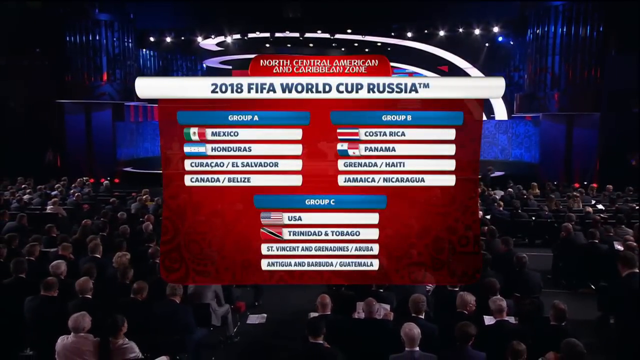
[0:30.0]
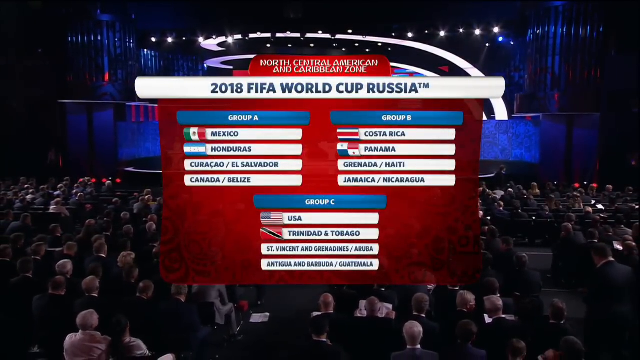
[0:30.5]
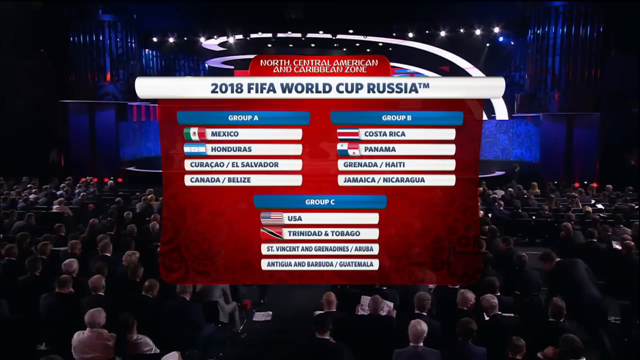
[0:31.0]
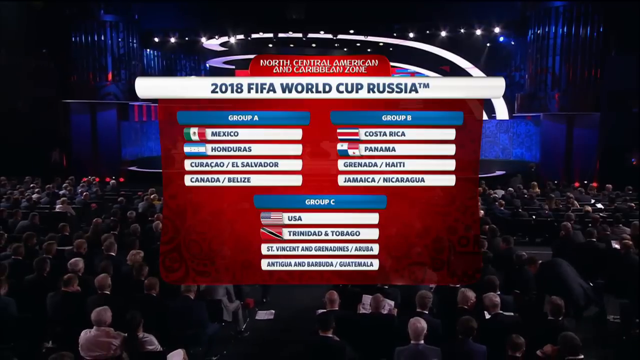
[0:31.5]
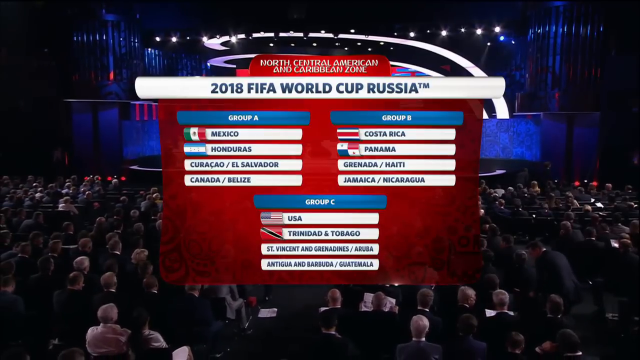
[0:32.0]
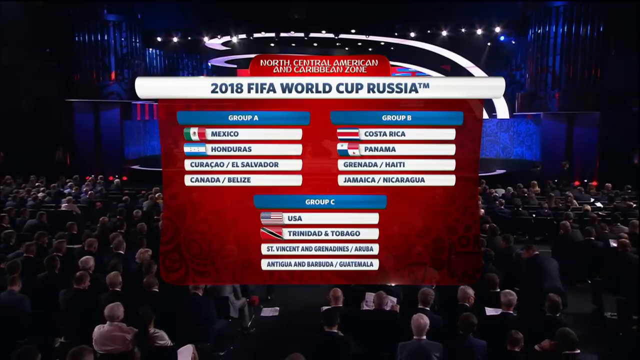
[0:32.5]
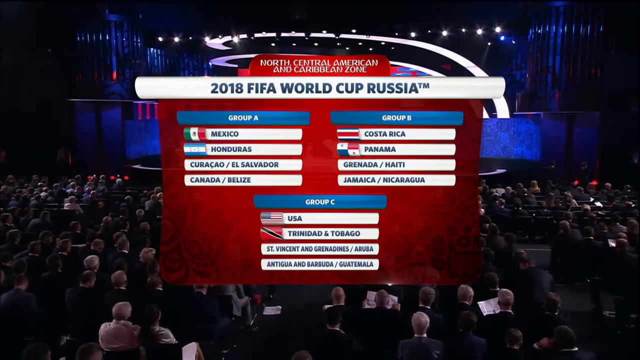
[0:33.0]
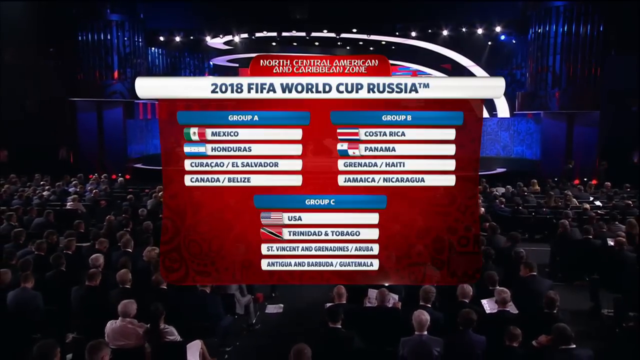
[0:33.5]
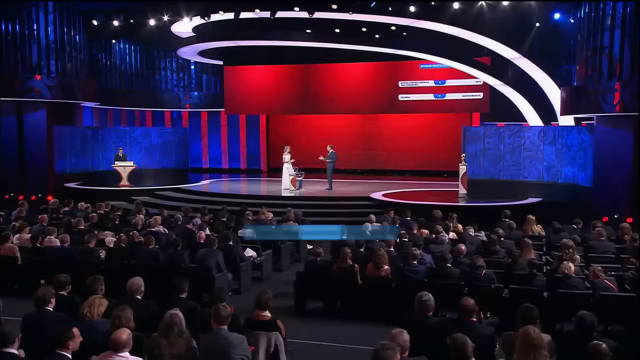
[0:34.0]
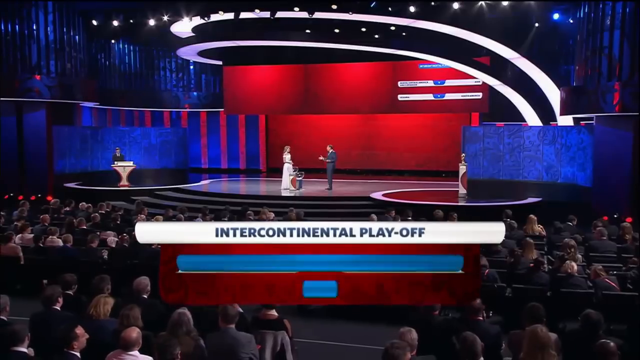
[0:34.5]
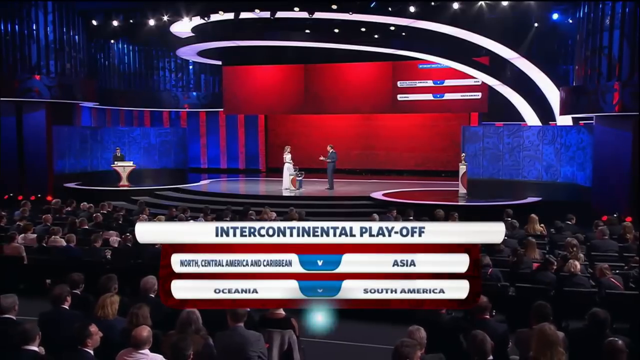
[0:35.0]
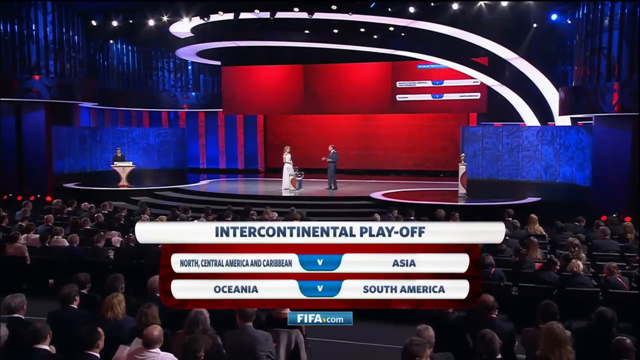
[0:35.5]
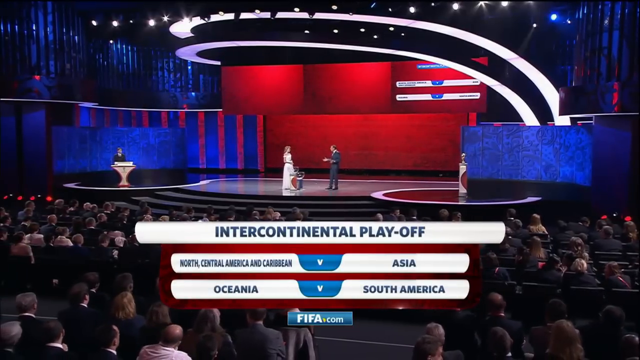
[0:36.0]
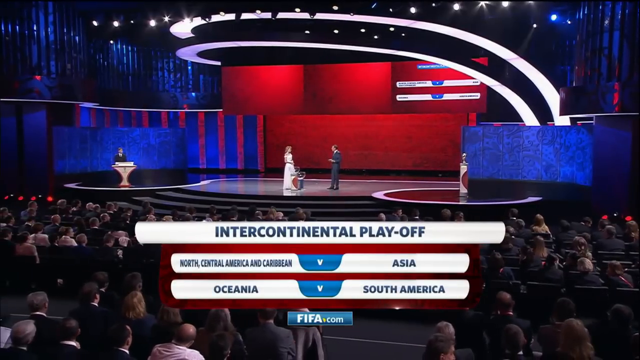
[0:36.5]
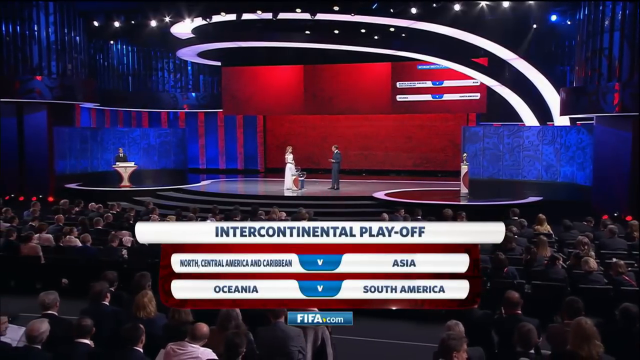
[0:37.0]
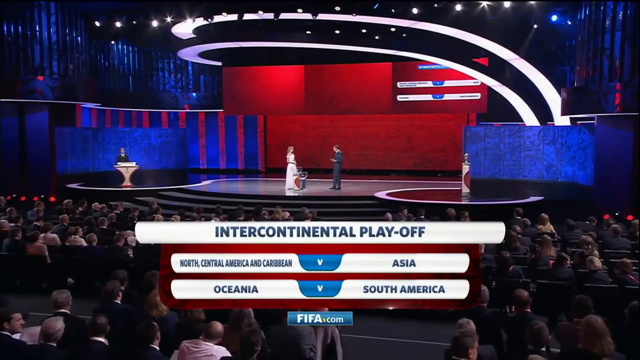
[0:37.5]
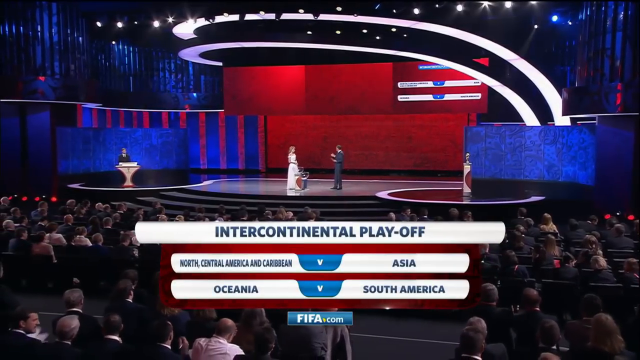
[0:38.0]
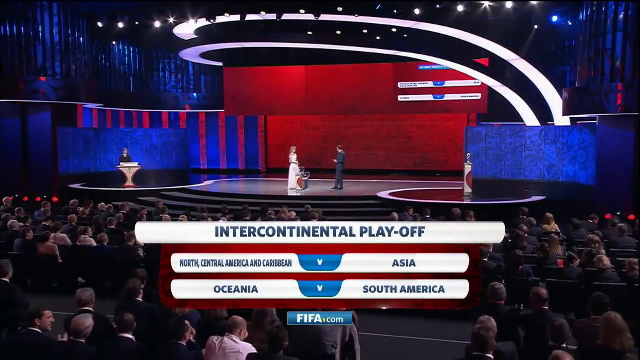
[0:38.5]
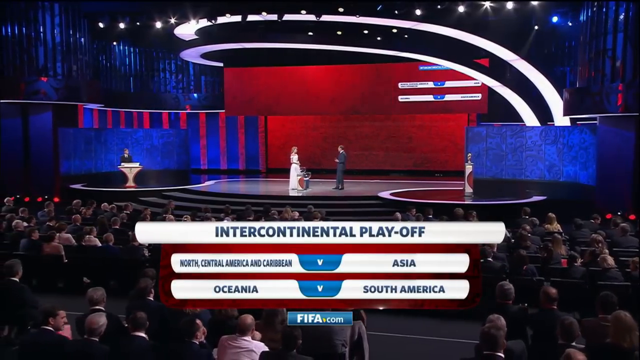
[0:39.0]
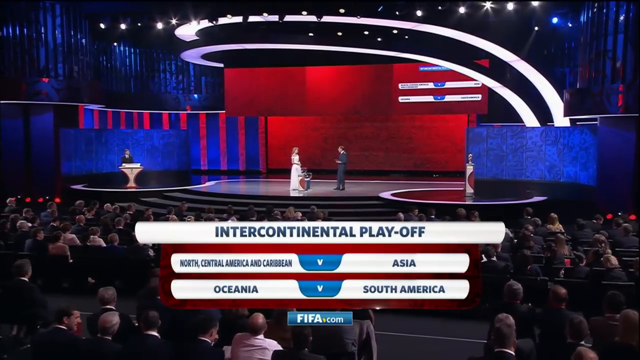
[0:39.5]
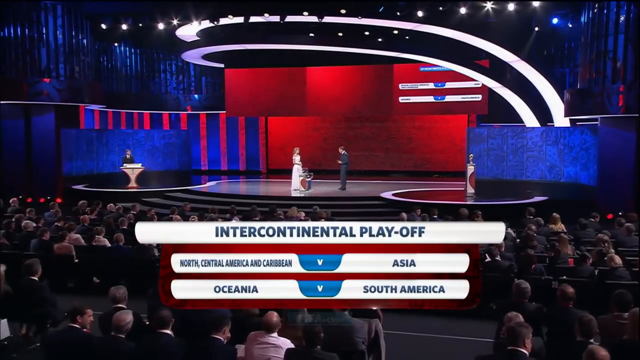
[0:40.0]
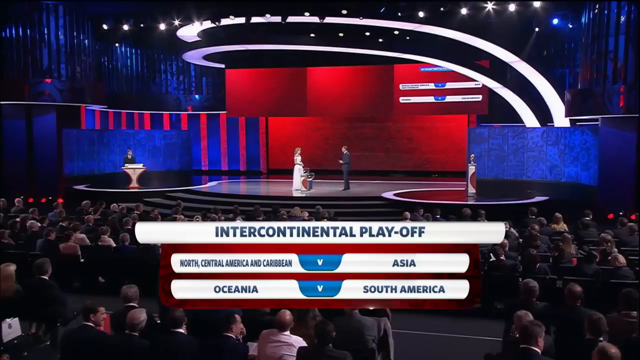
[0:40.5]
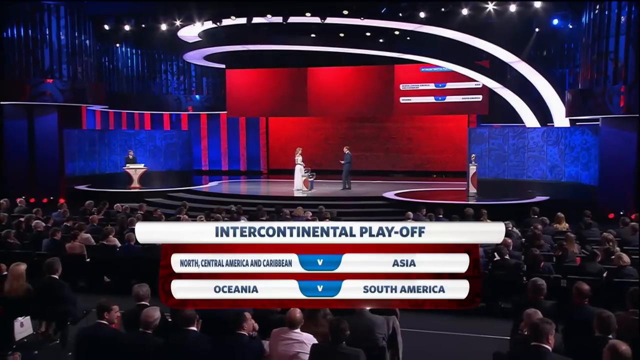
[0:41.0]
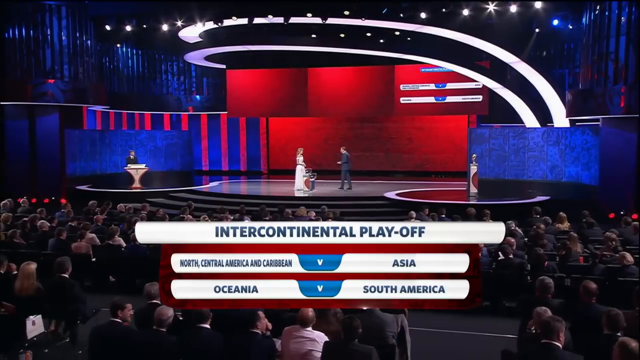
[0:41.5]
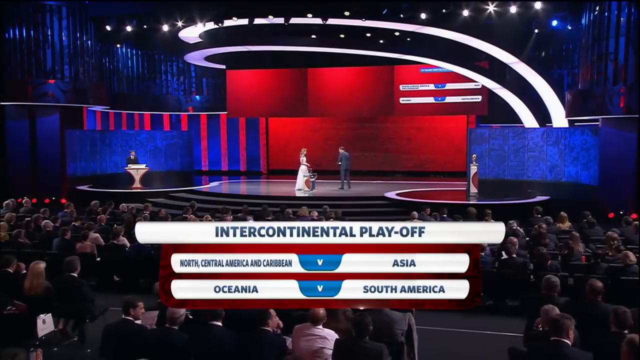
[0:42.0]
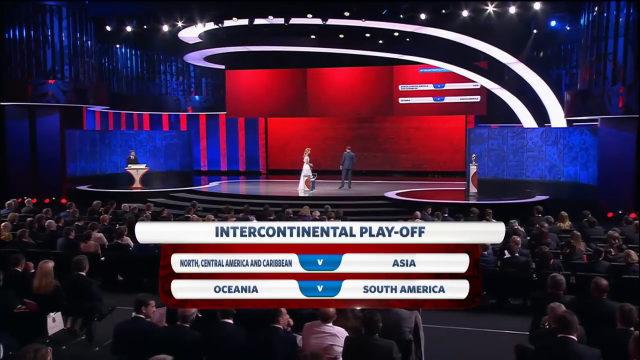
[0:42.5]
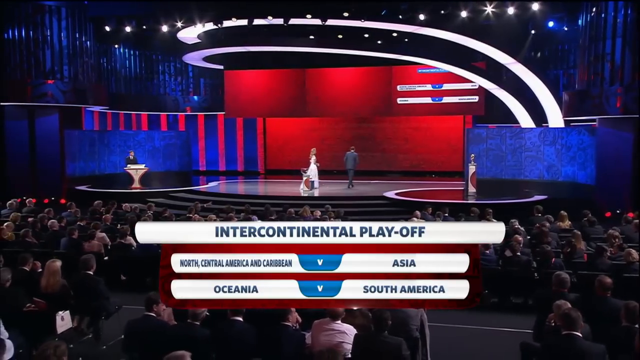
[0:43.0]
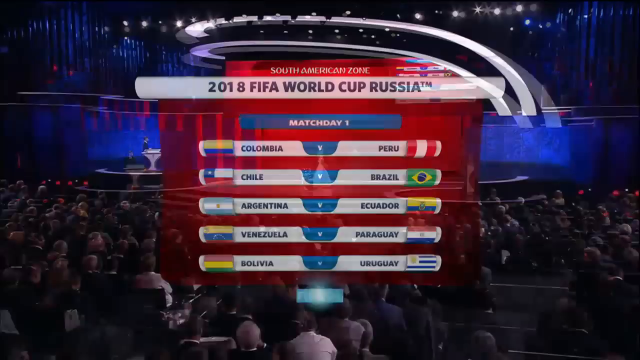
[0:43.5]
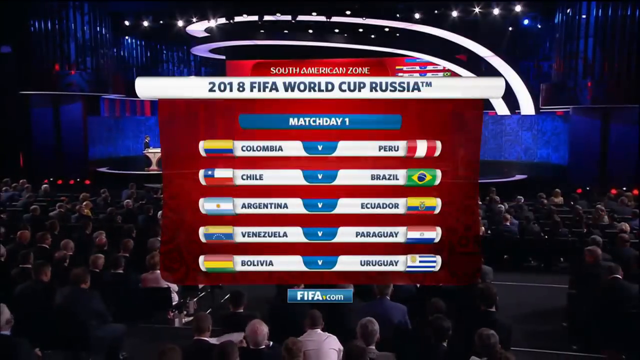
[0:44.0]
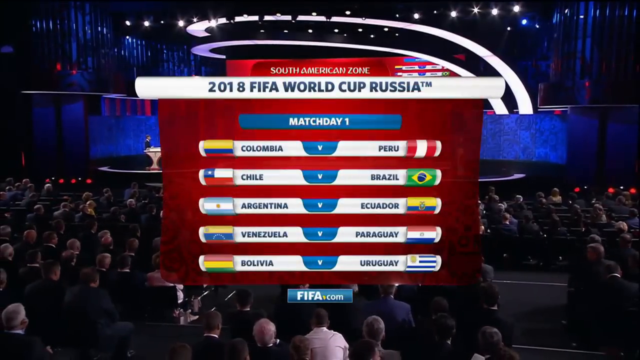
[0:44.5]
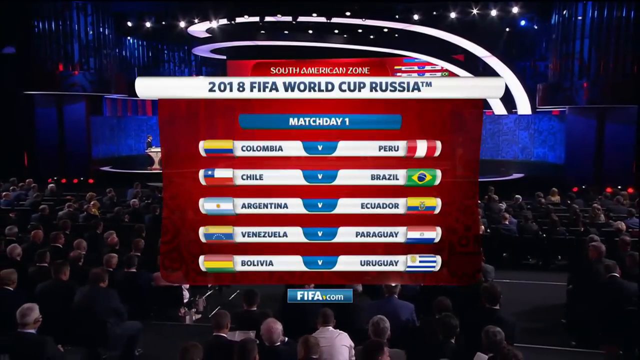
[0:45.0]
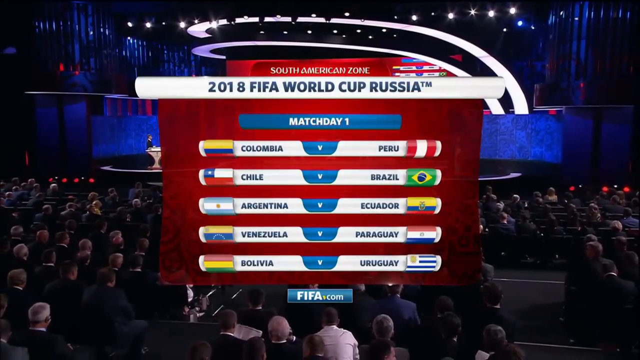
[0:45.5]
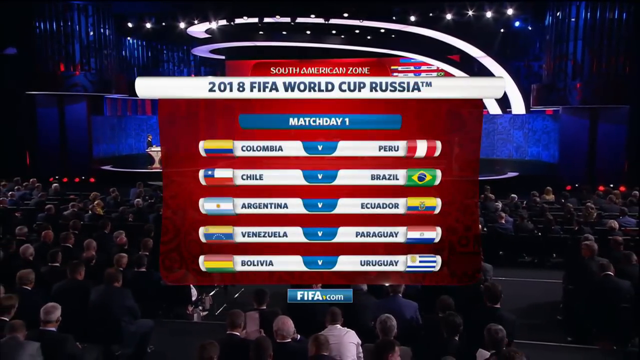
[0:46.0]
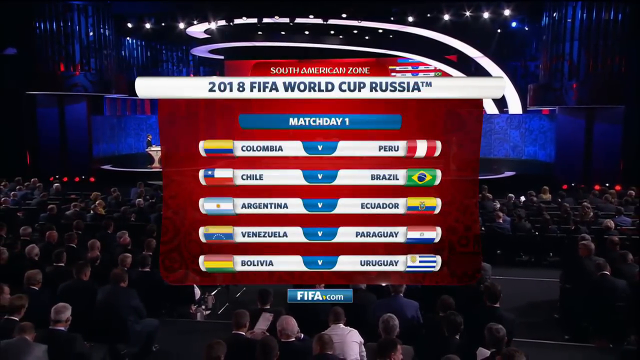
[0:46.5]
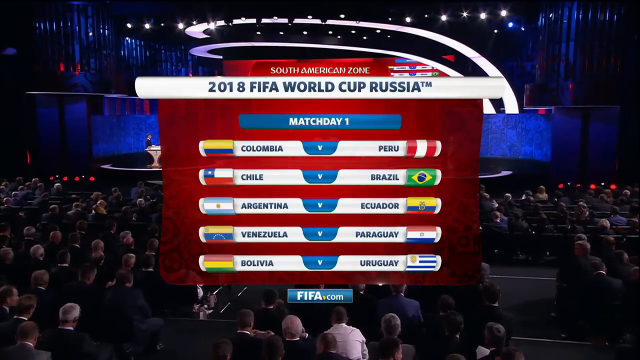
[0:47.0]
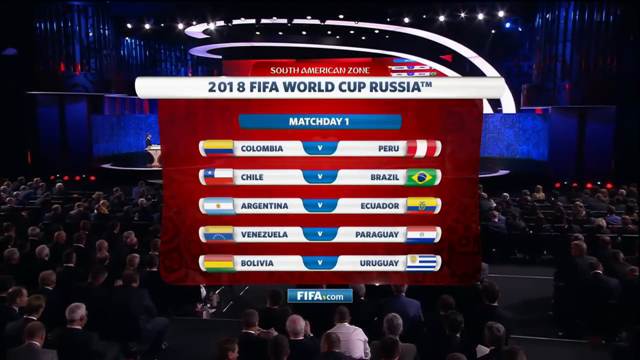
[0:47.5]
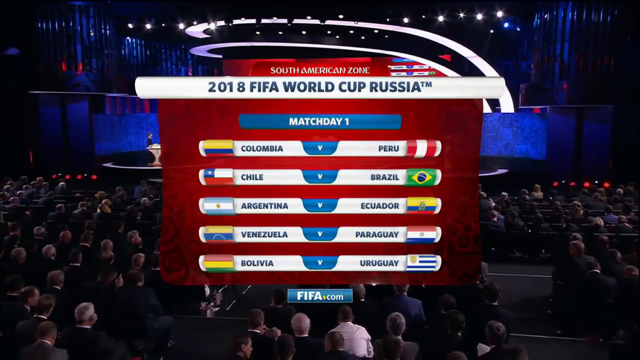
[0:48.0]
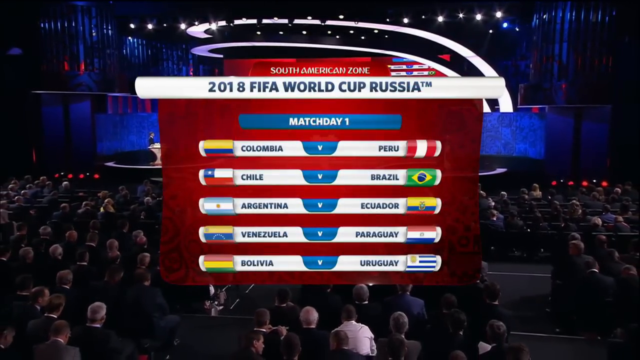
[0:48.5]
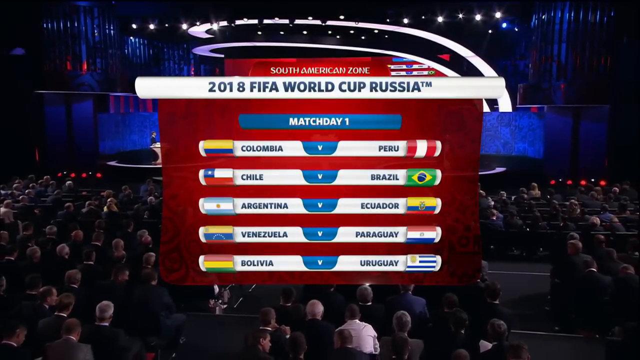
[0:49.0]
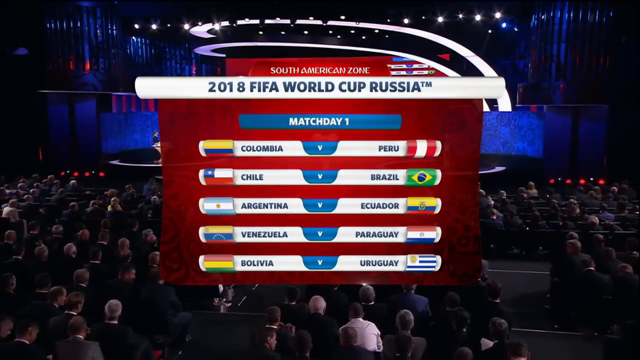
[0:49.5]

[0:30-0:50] The same list remains on screen, reading "North Central American Caribbean zone 2018 FIFA World Cup Russia group A Mexico Honduras Curaçao / El Salvador Canada Belize group B Costa Rica Panama Granada / Haiti Jamaica / Nicaragua group C USA Trinidad and Tobago St. Vincent and Grenadines / Aruba Antigua and Barbuda / Guatemala". Another screen follows with text reading "intercontinental playoff North Central America and Caribbean versus Asia Oceania versus South America". Then another list appears reading "South American zone 2018 FIFA World Cup Russia match day one Colombia versus Peru Chile versus Brazil Argentina versus Ecuador Venezuela versus Paraguay Bolivia versus Uruguay FIFA.com". The video is in a rectangular shape, of good quality, with smooth transitions.